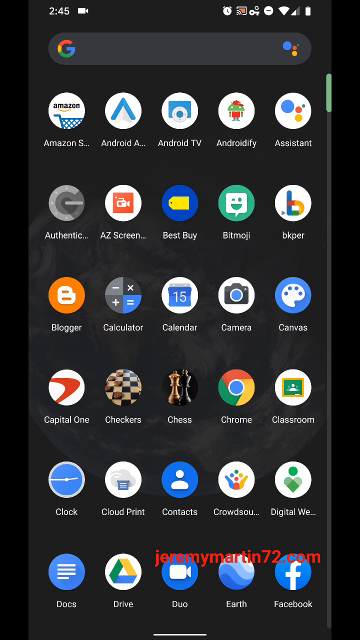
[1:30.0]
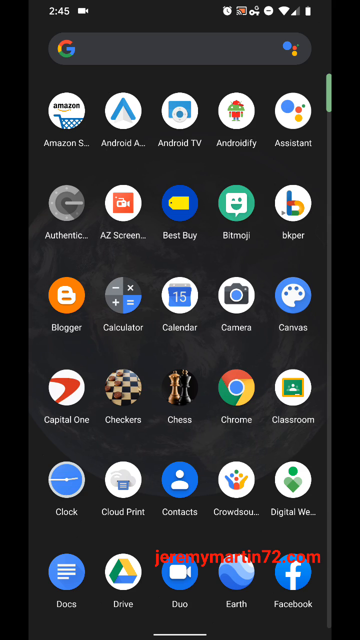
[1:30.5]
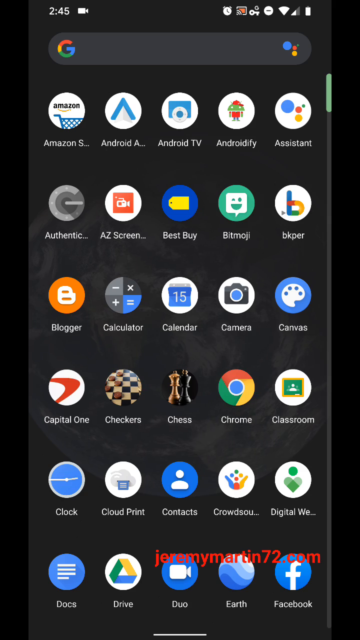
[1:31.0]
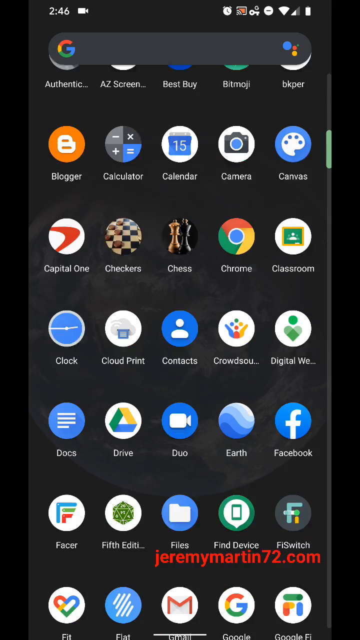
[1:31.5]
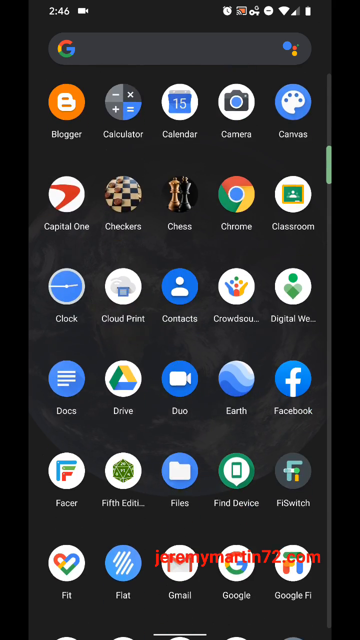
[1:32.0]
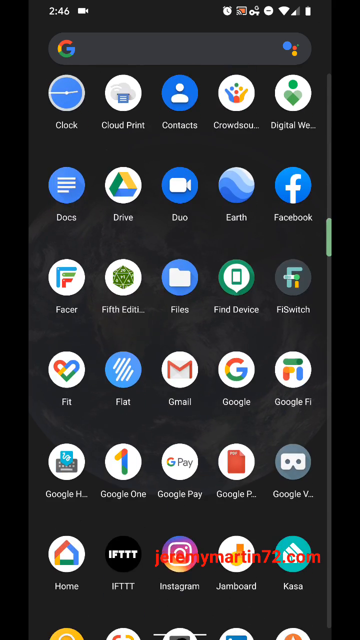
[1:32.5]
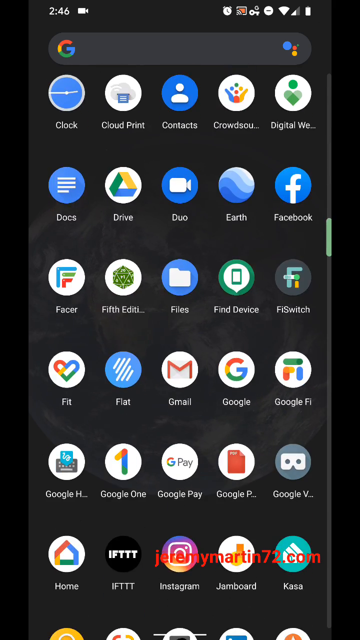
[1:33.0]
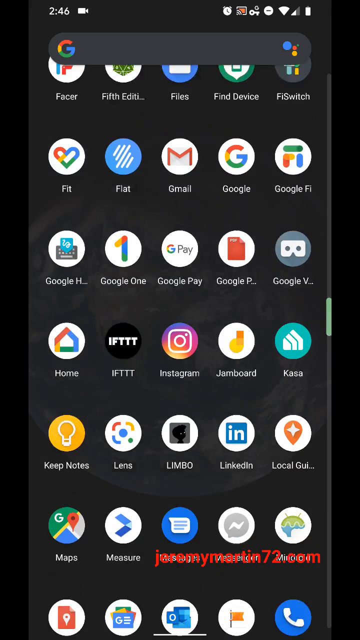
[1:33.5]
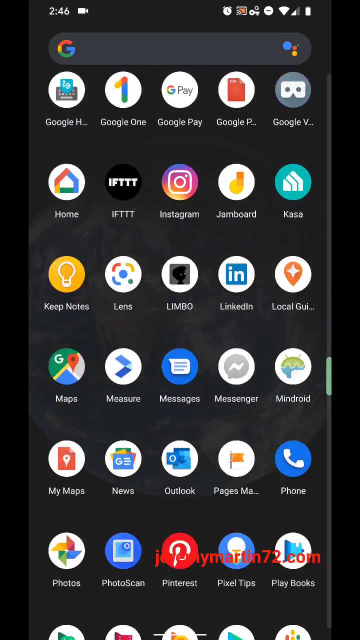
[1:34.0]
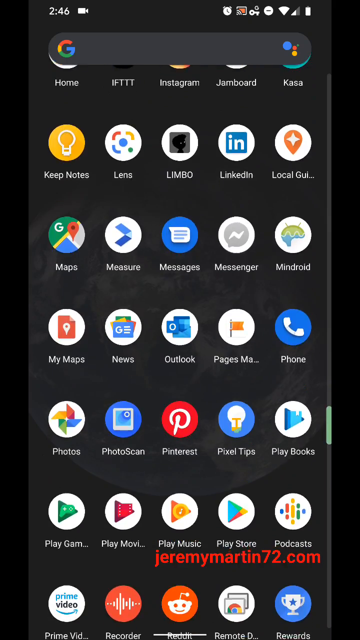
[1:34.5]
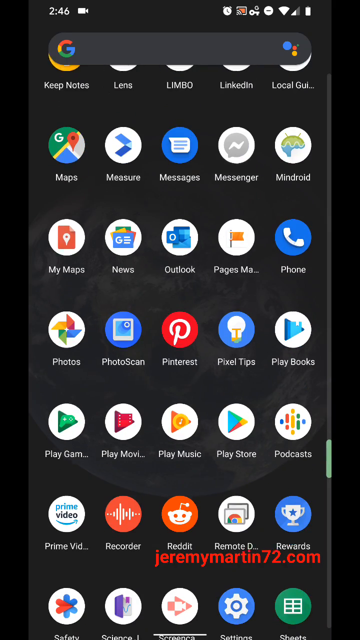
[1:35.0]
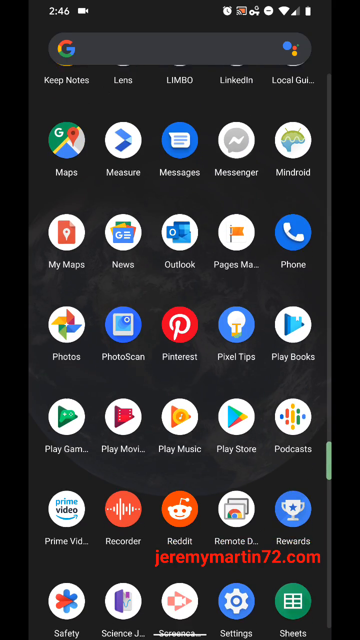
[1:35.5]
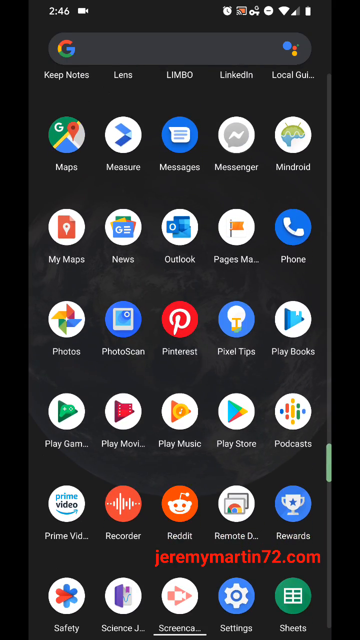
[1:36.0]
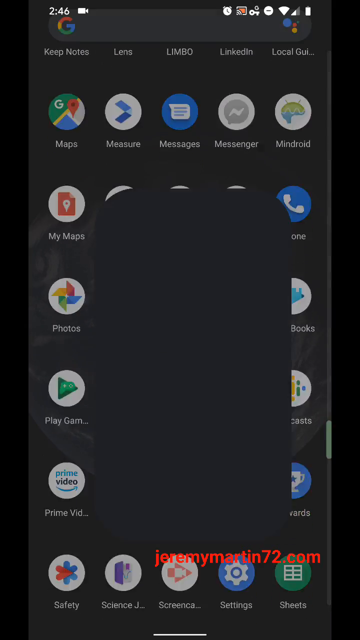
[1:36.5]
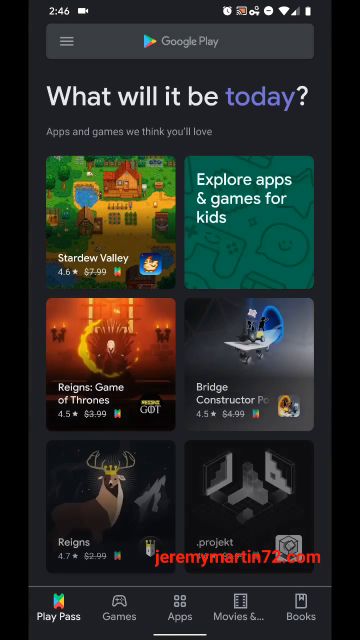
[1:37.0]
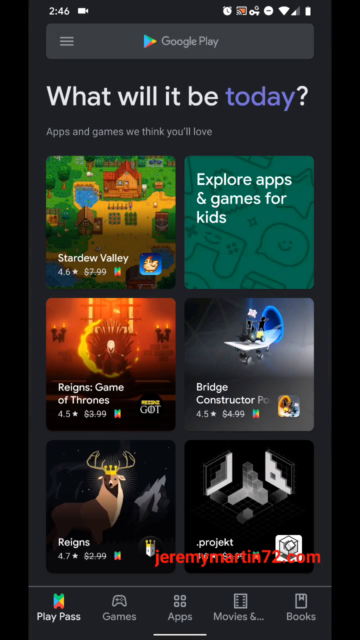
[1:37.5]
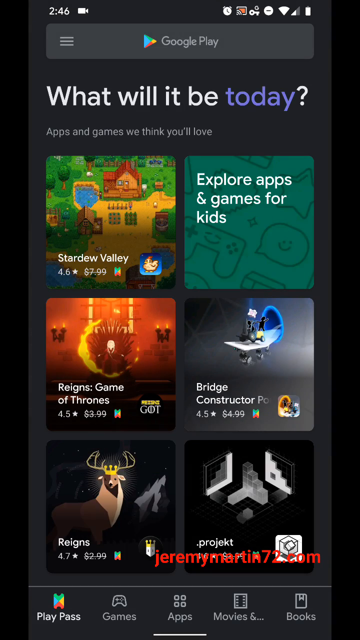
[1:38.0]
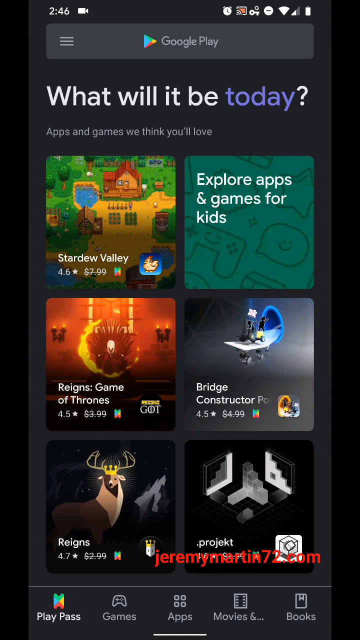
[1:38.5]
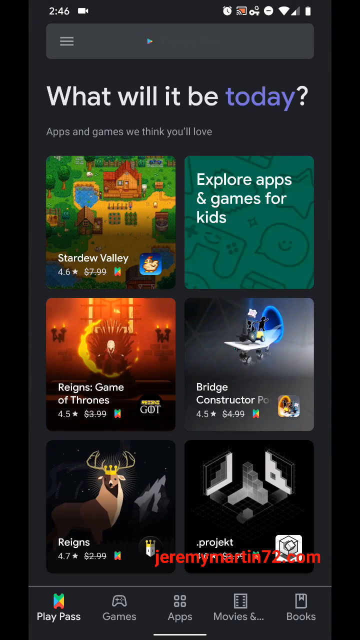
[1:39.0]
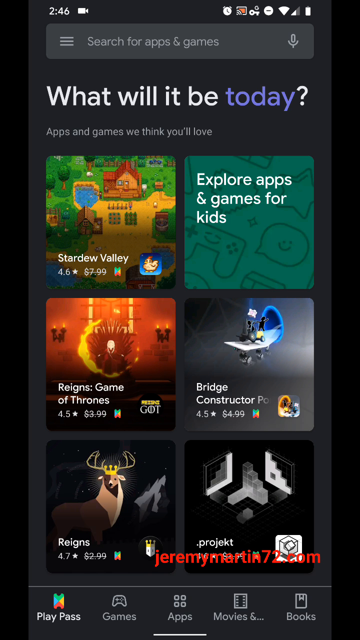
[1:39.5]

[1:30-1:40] The apps window is open with all the apps on display, six rows of five icons each. The user scrolls down, revealing a large number of apps; a green scroll bar on the right-hand side shows the page being scrolled. The user keeps scrolling down, pausing briefly between scrolls, scrolls down once more and pauses for a few seconds, then scrolls down until the scroll bar is about one-fourth of the way from the bottom. The user briefly scrolls up slightly, hovering on the screen, then selects the Play Store app. The page opens with Google Play at the top and a search bar at the very top, with six apps suggested for the user.